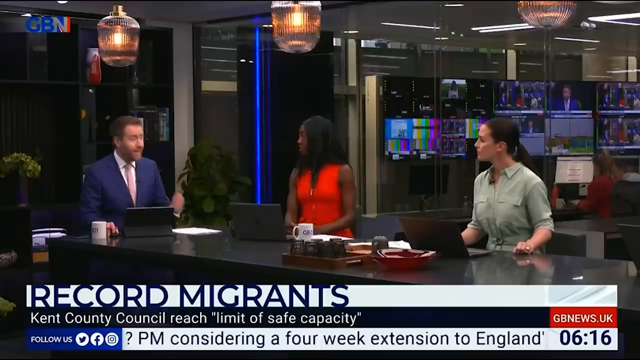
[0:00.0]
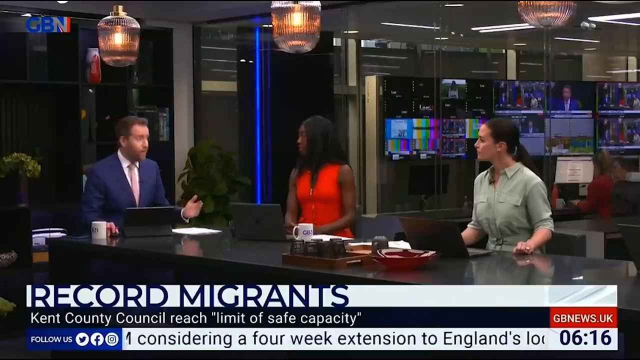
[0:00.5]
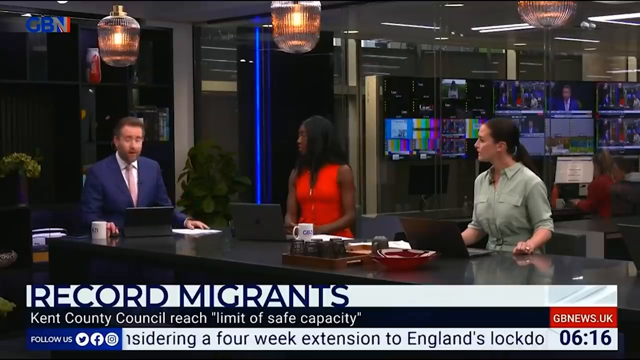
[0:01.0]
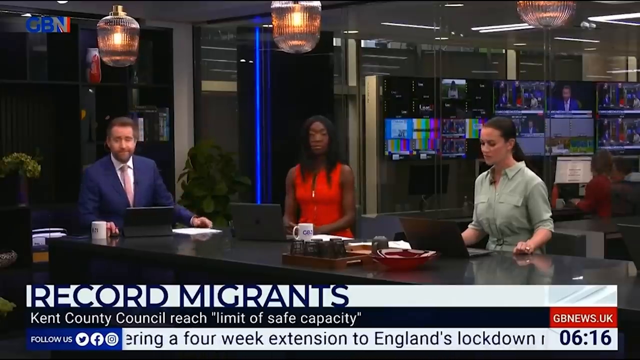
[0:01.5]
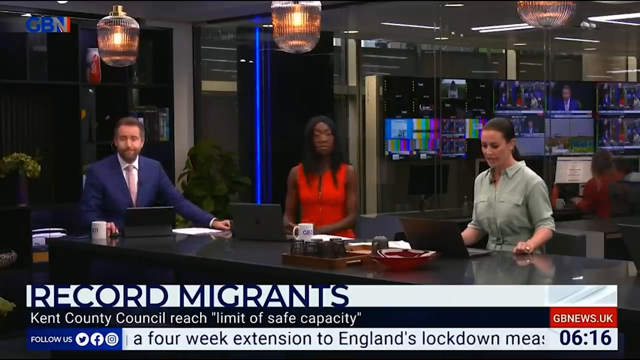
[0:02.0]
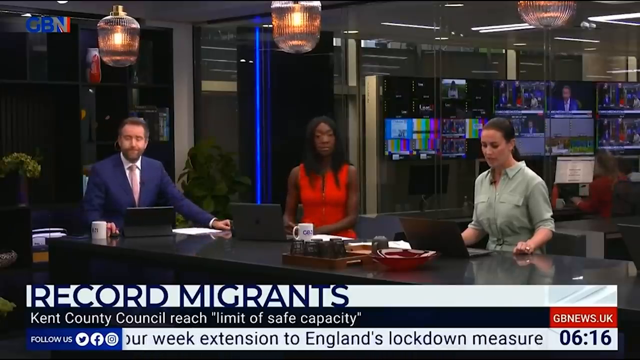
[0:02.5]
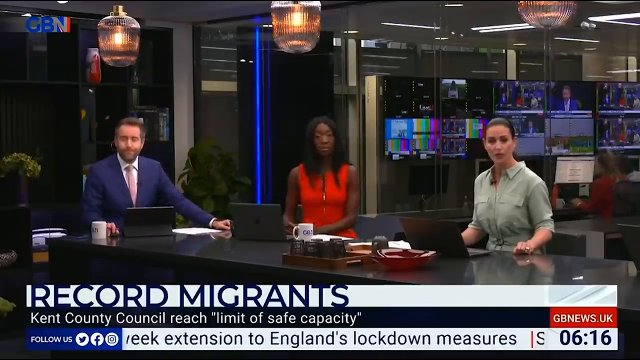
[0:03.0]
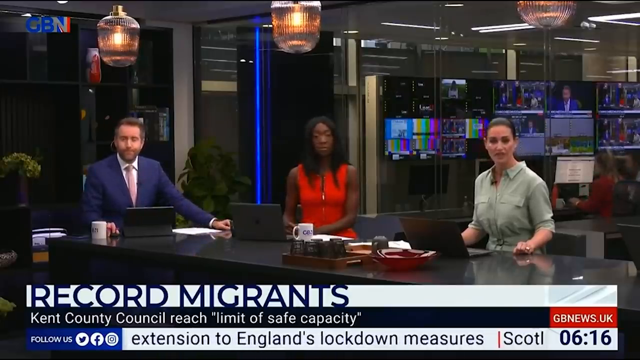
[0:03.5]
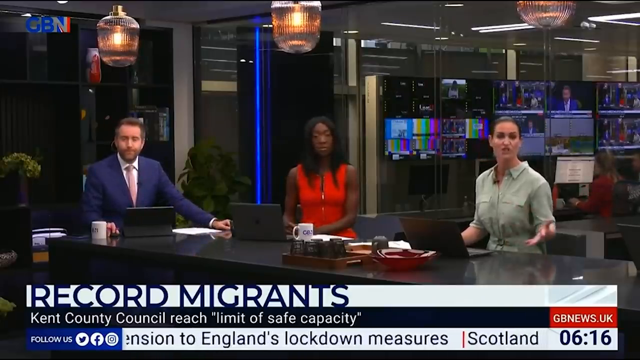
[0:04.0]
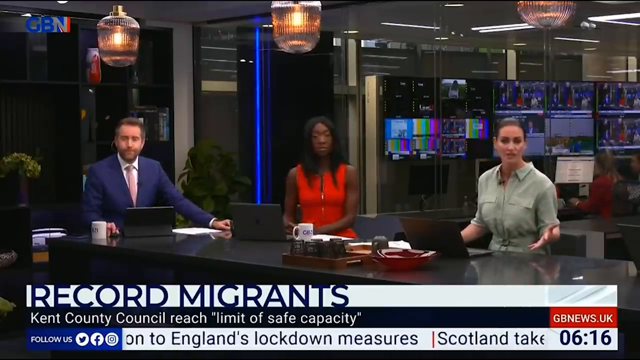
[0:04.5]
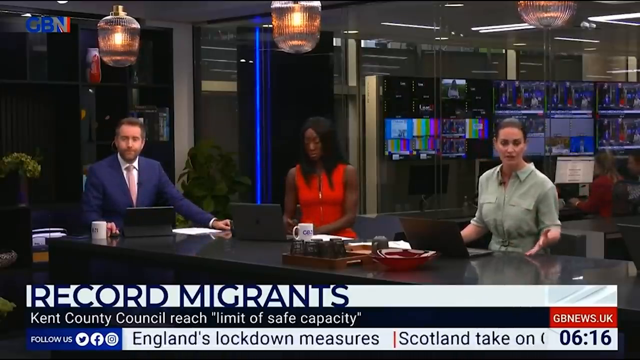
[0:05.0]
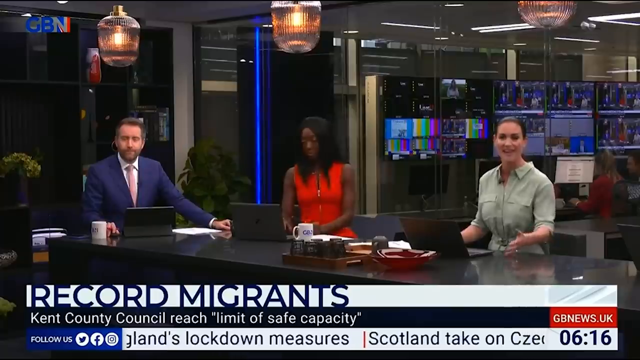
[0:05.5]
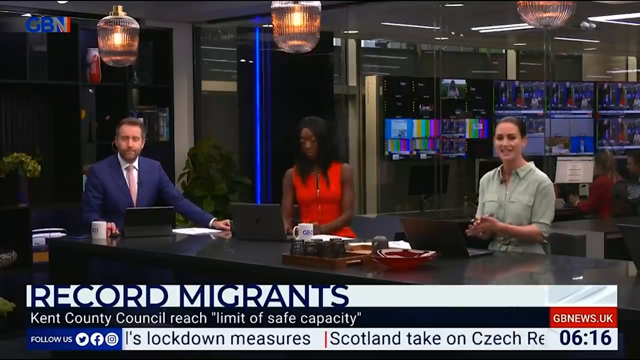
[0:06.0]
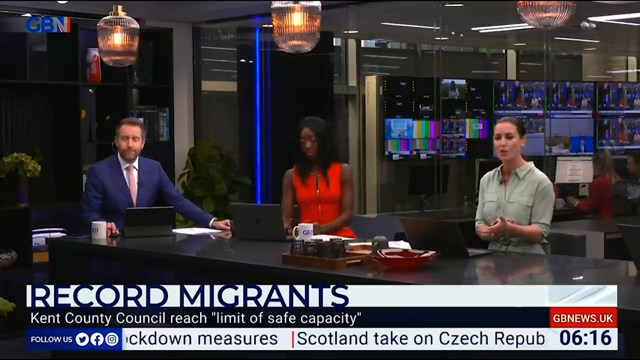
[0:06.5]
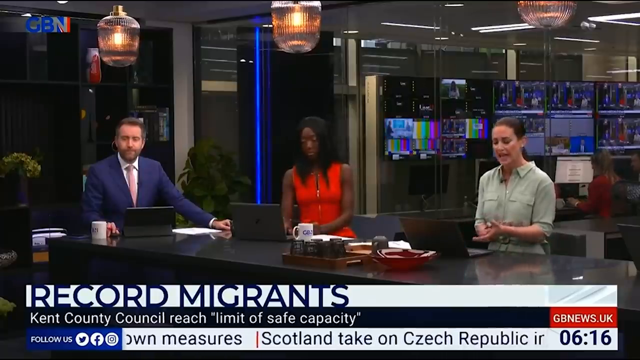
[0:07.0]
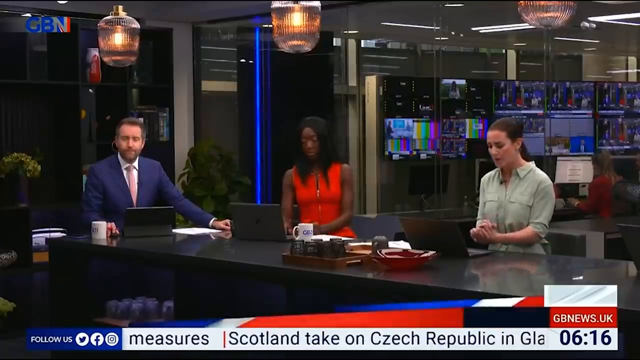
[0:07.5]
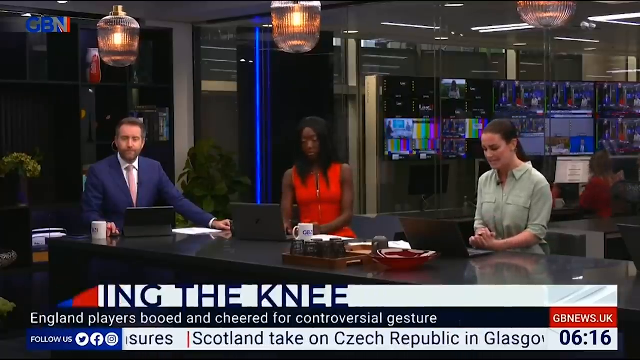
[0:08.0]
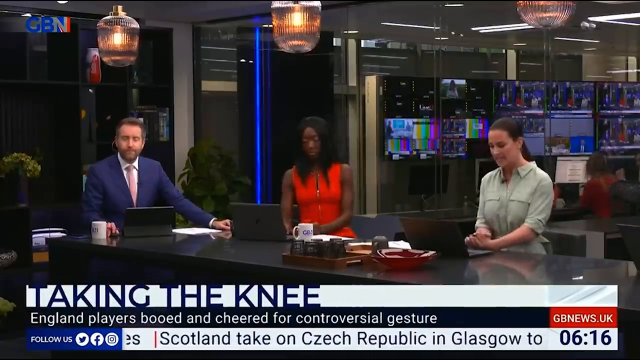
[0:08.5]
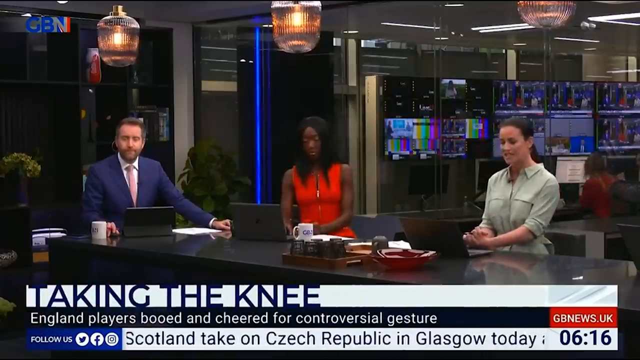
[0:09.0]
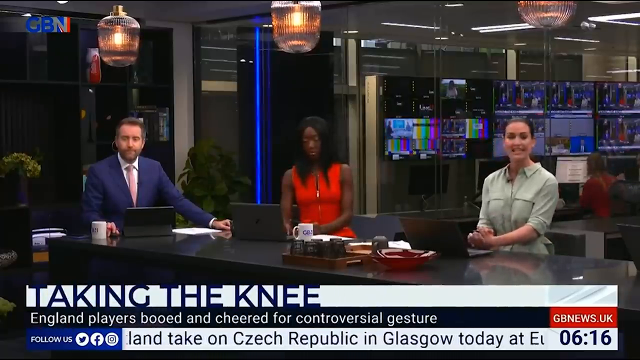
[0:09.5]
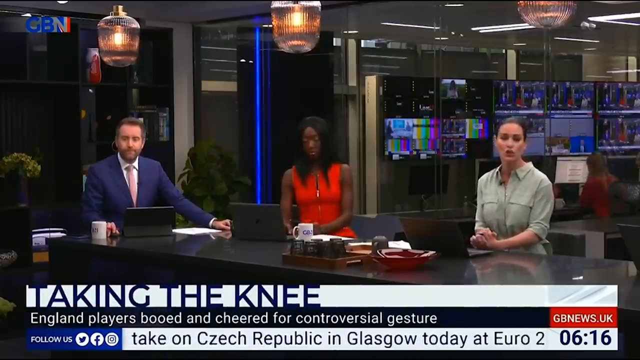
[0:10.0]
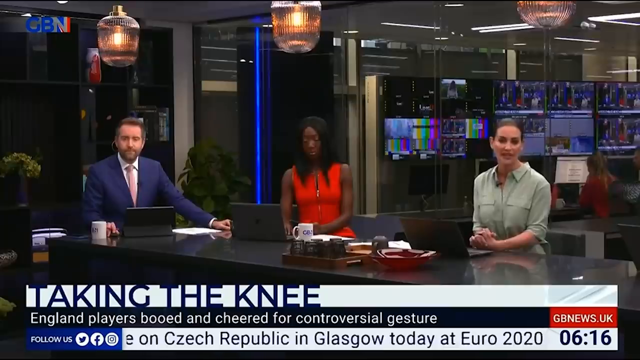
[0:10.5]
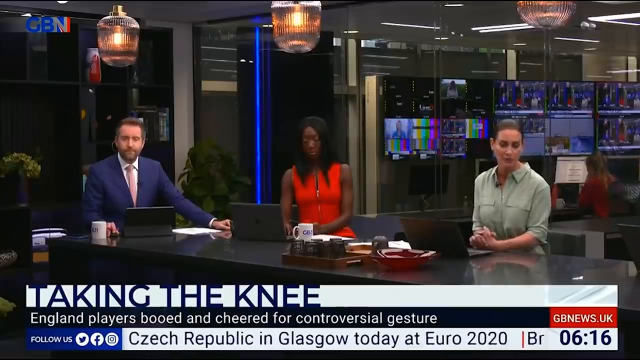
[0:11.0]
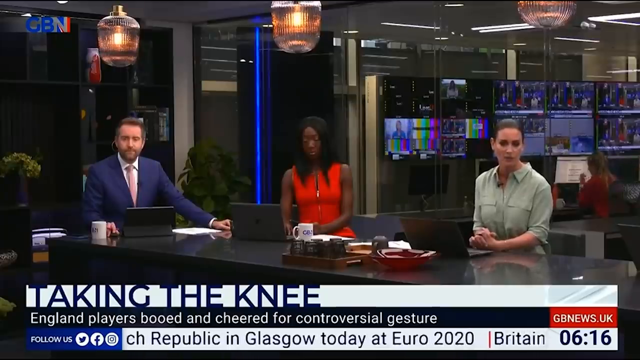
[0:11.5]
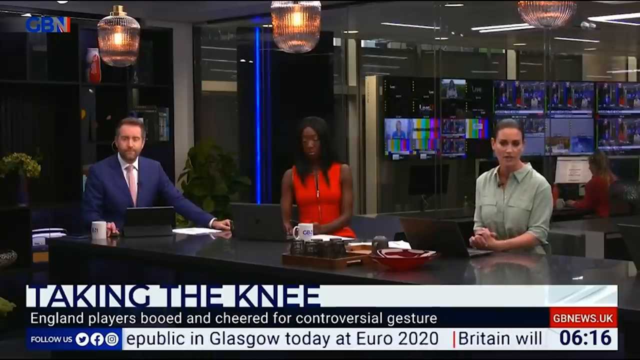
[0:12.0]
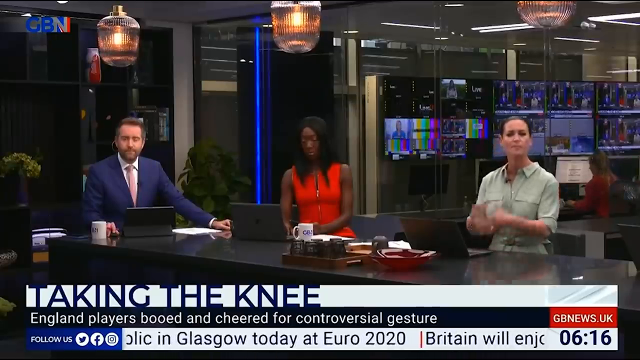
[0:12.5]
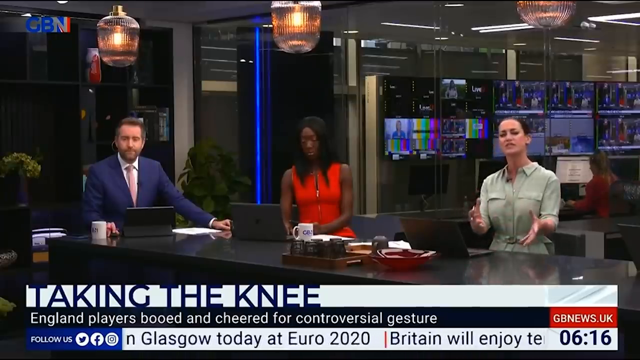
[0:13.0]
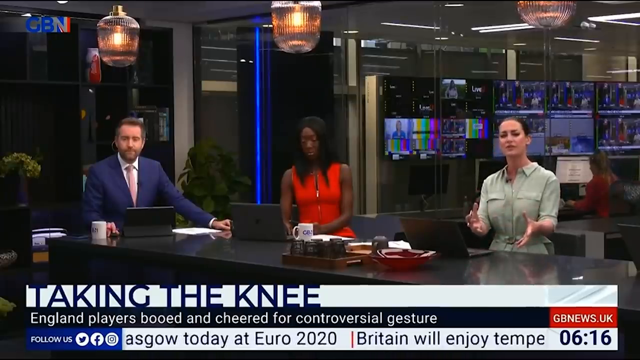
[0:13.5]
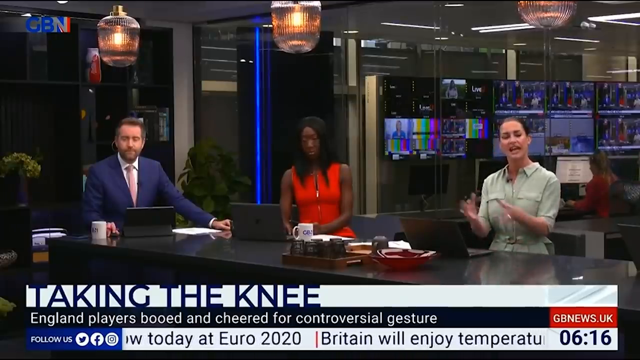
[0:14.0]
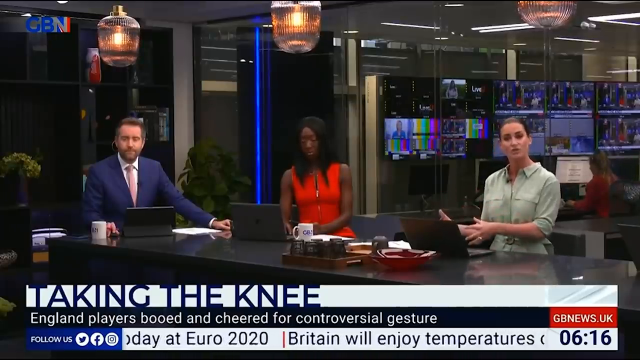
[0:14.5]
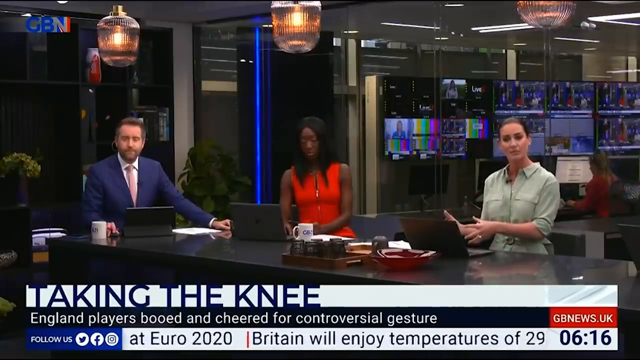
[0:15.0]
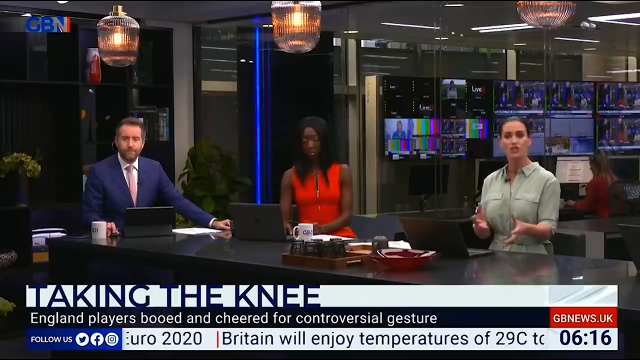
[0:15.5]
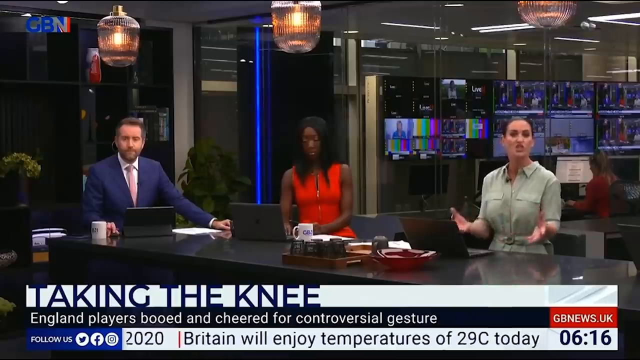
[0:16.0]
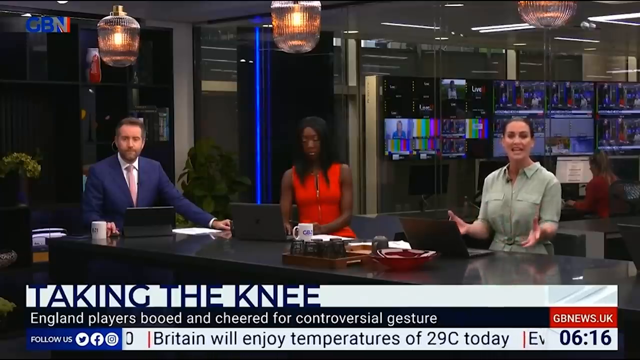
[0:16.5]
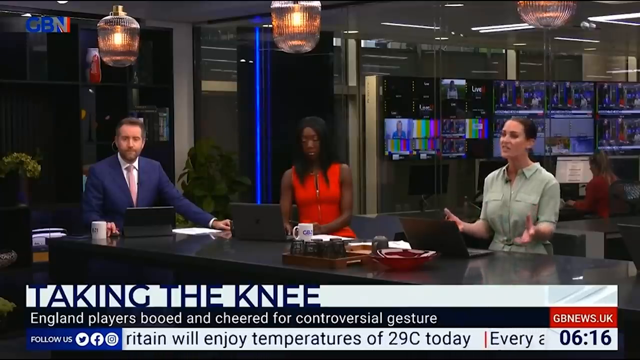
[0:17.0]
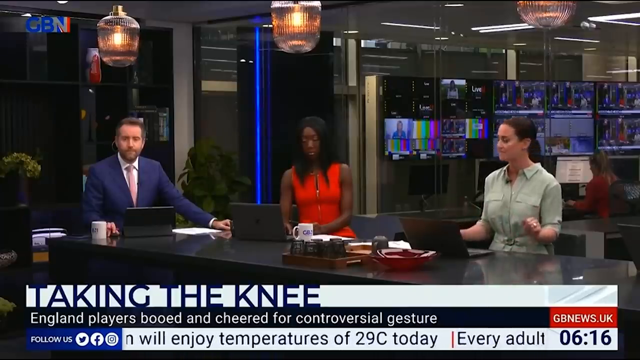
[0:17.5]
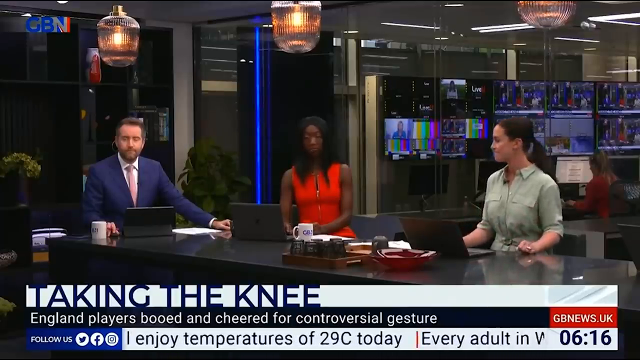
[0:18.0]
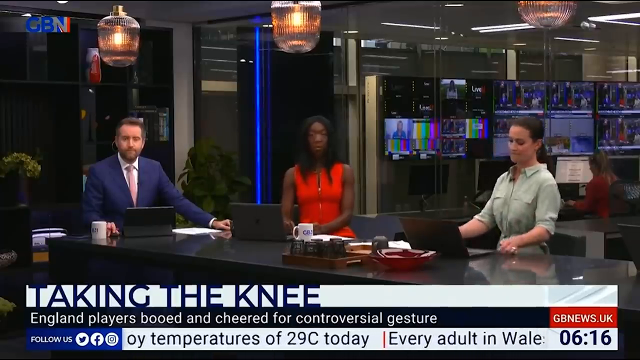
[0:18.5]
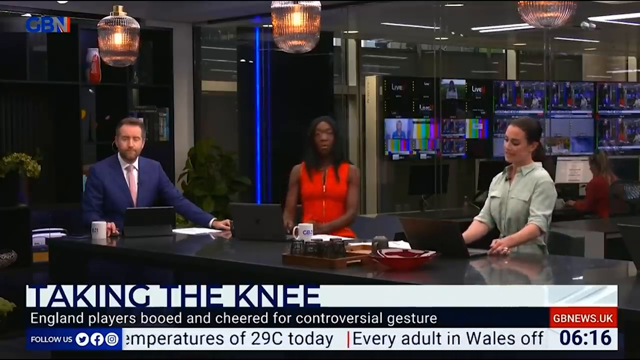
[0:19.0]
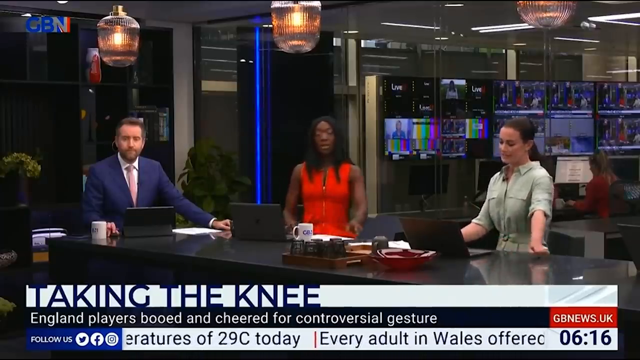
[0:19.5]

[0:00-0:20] People sit at their desks. On the left side of the screen is a man in a suit sitting at the desk with his hand on the computer mouse. In the middle of the screen is a black woman in a red dress, looking over at the man in the suit. On the right side is a white woman in a teal dress with her hands on the desk in front of her; she is also looking over at the man. At the bottom of the screen the text reads "record migrants," and below that "Kent County Council reached limit of safe capacity." To the right of this, on the right of the screen, is "gbnews.uk." The man is talking and raises his left hand. The woman in the teal dress begins talking, holding her left hand up; she rubs her hands together, then places them together on the desk in front of her as she continues to talk. She separates them, pulls them out with palms facing each other, and moves them toward the left and right sides of the screen, back and forth. She turns her palms facing out and shakes them, then looks back over, and the black woman begins to talk.